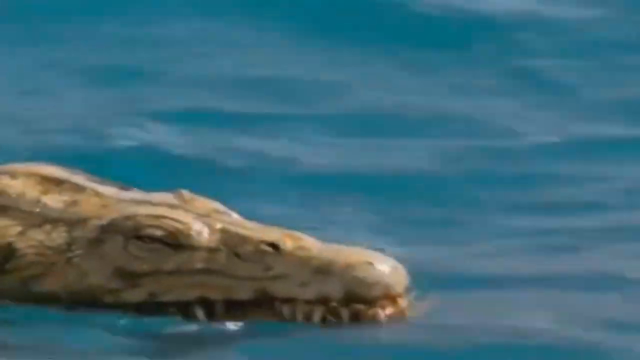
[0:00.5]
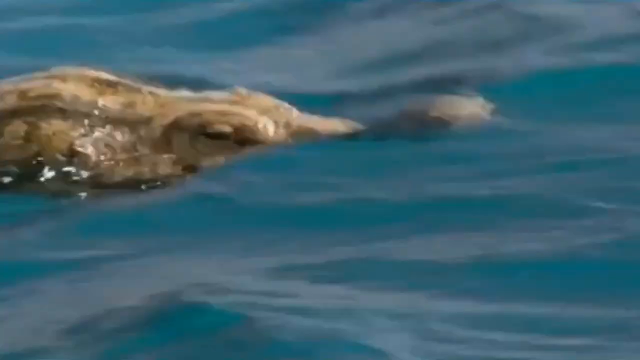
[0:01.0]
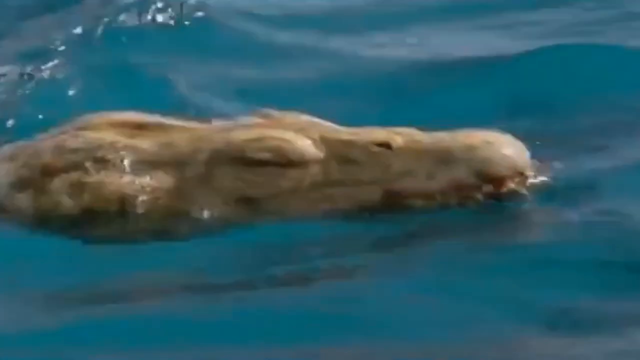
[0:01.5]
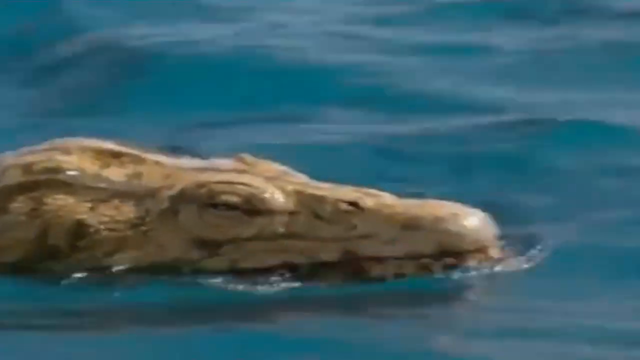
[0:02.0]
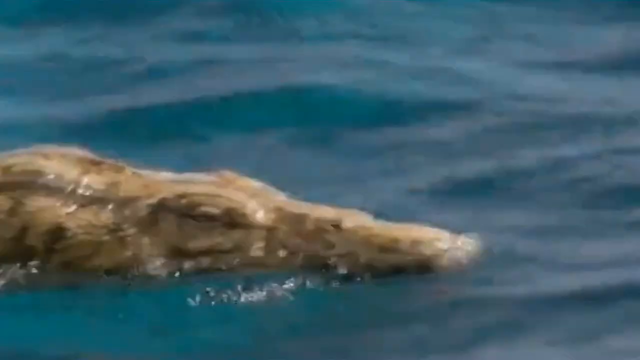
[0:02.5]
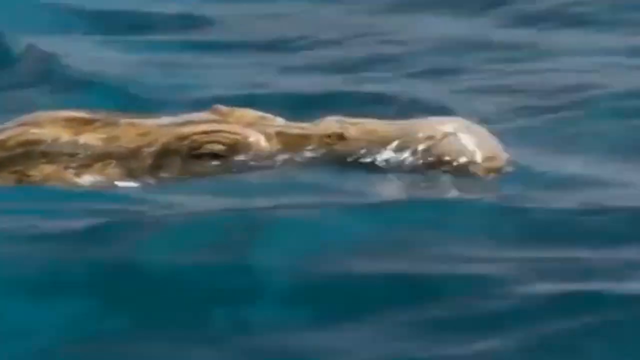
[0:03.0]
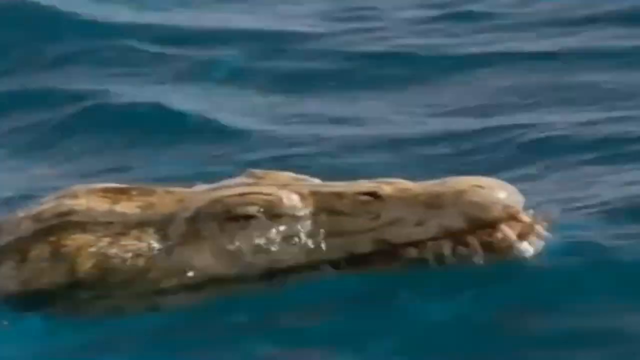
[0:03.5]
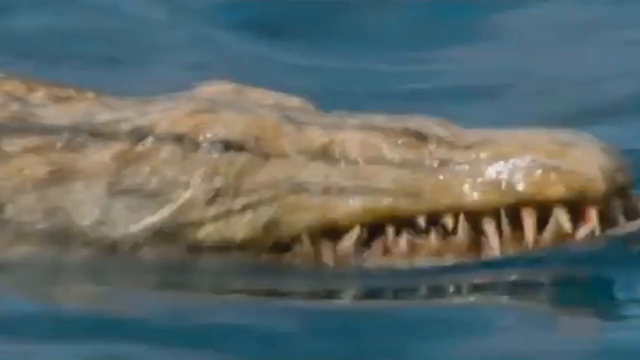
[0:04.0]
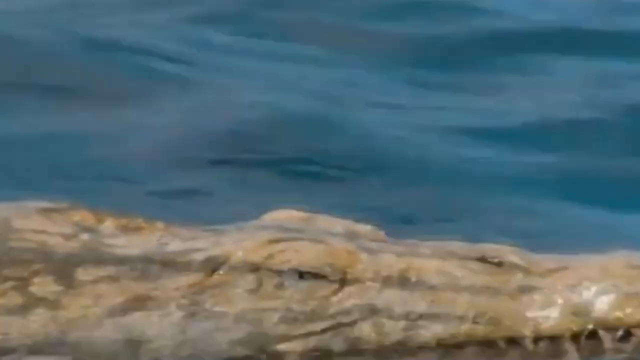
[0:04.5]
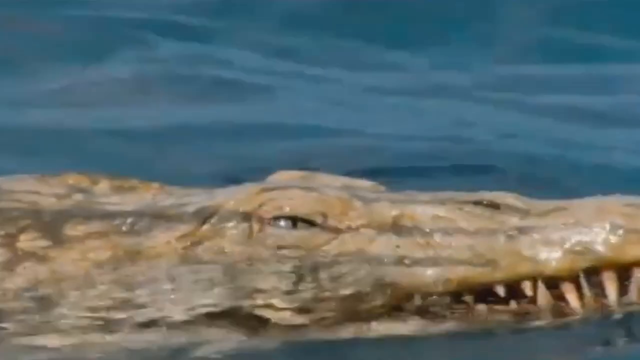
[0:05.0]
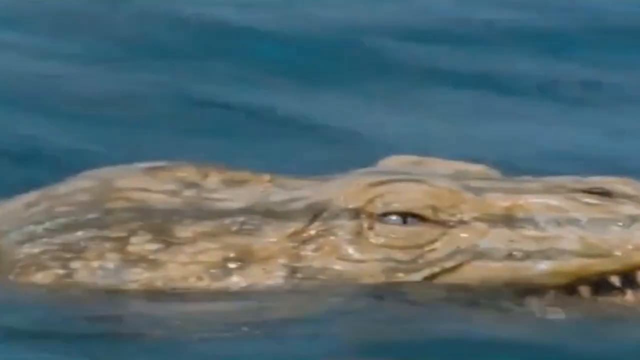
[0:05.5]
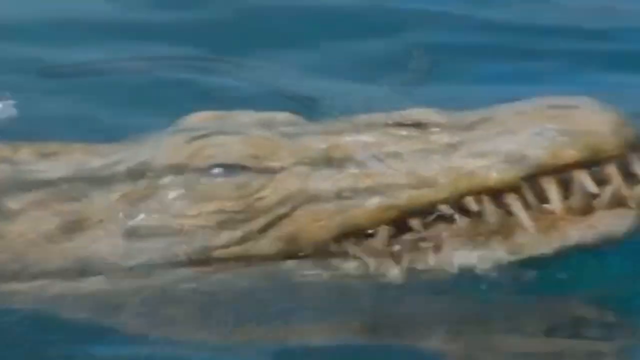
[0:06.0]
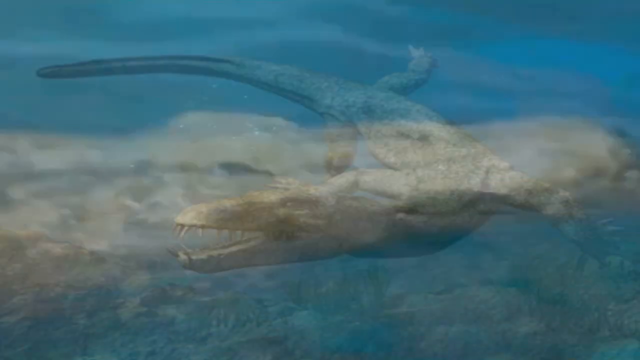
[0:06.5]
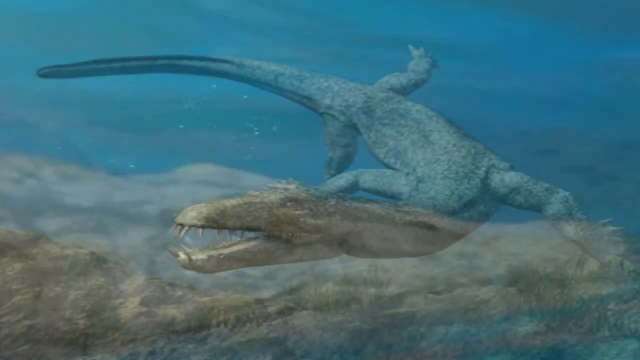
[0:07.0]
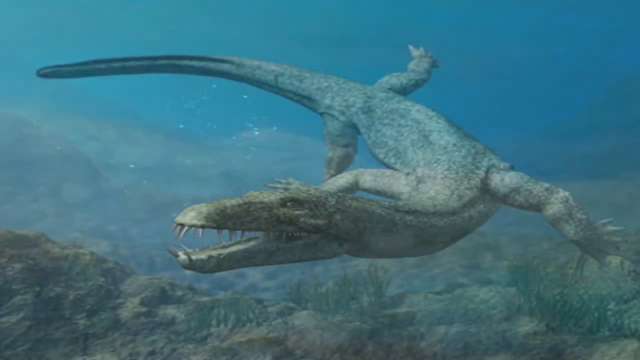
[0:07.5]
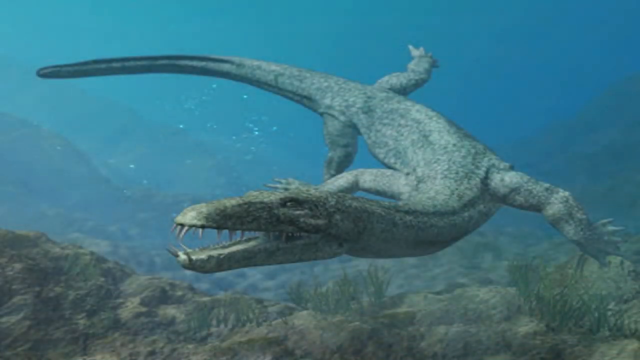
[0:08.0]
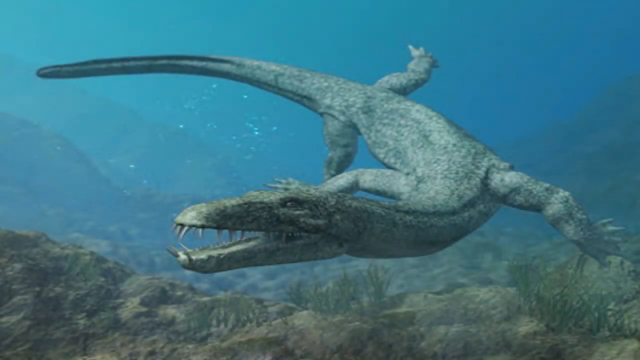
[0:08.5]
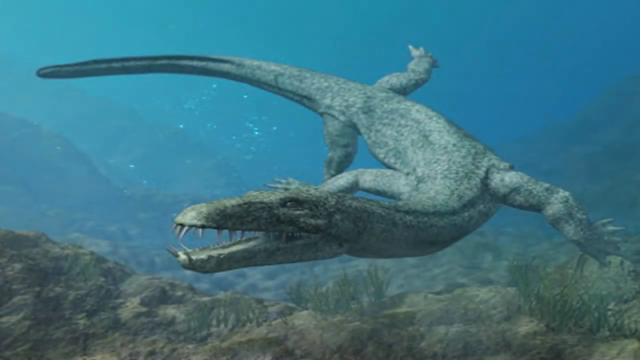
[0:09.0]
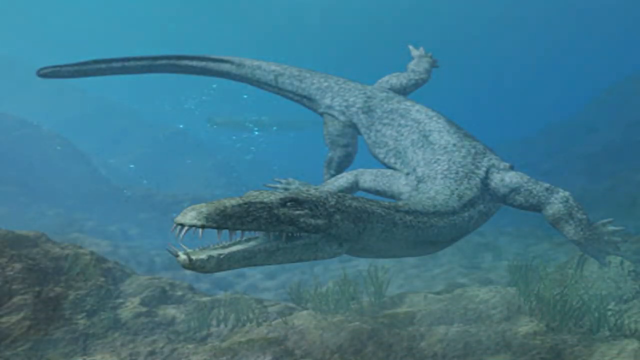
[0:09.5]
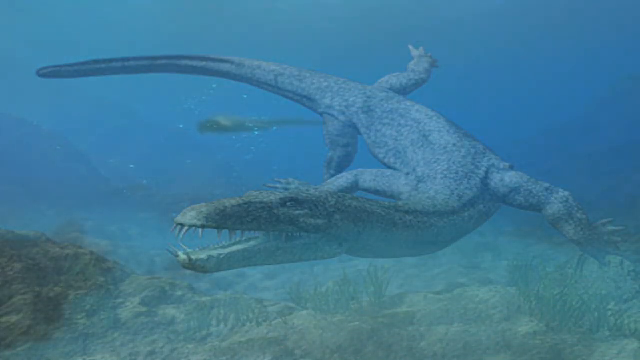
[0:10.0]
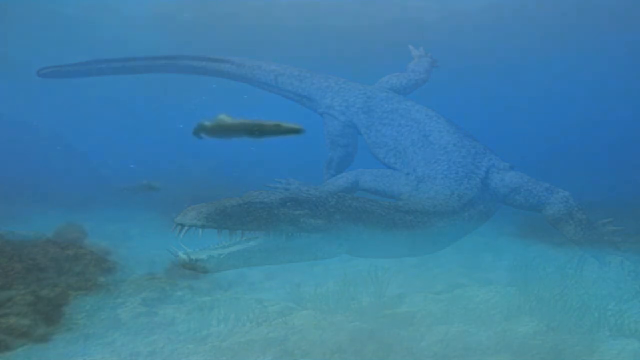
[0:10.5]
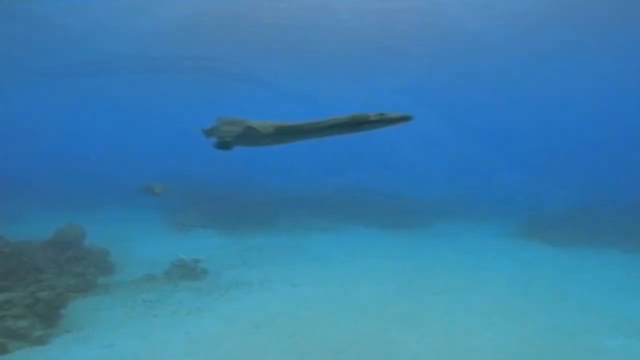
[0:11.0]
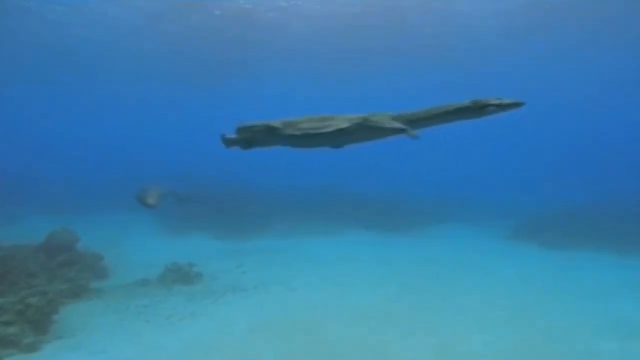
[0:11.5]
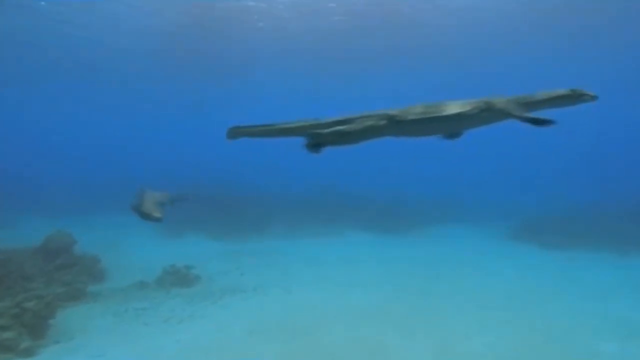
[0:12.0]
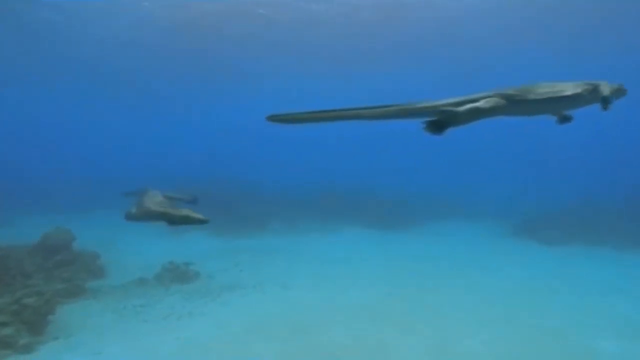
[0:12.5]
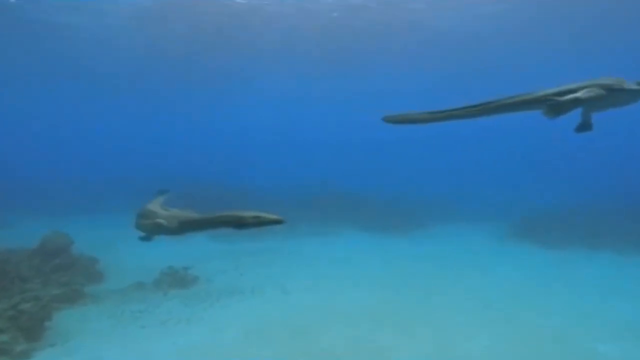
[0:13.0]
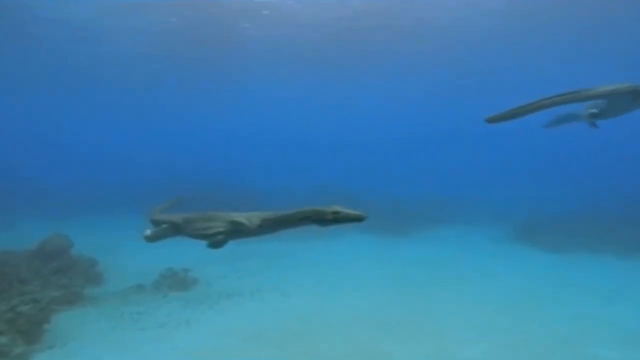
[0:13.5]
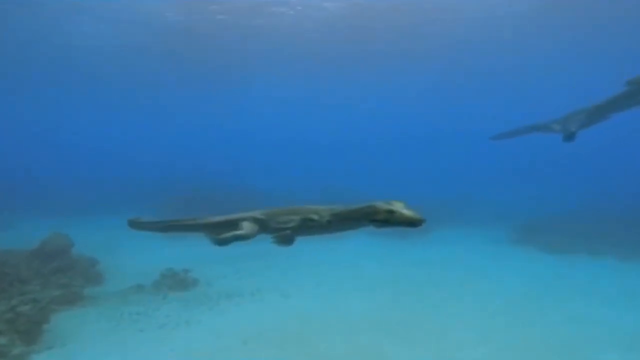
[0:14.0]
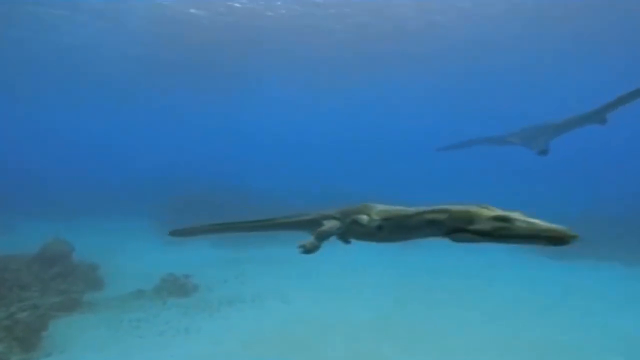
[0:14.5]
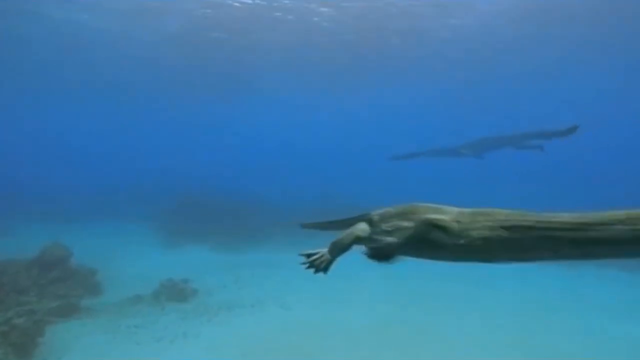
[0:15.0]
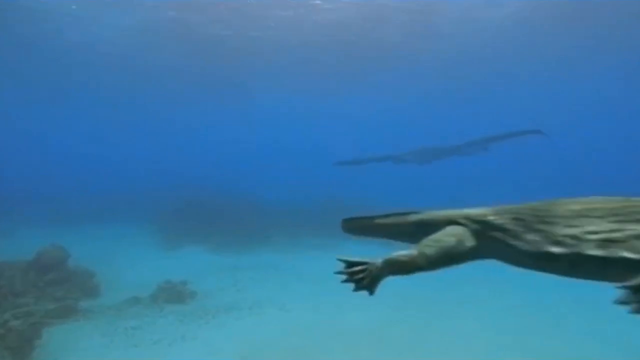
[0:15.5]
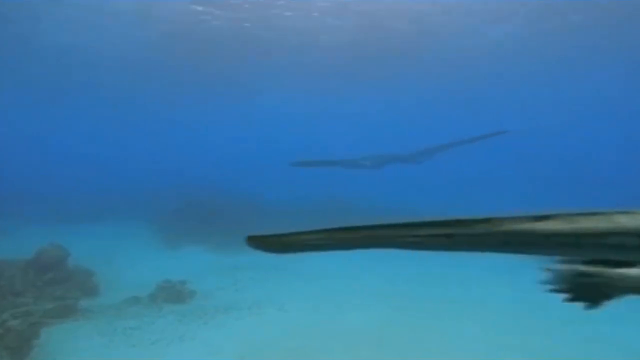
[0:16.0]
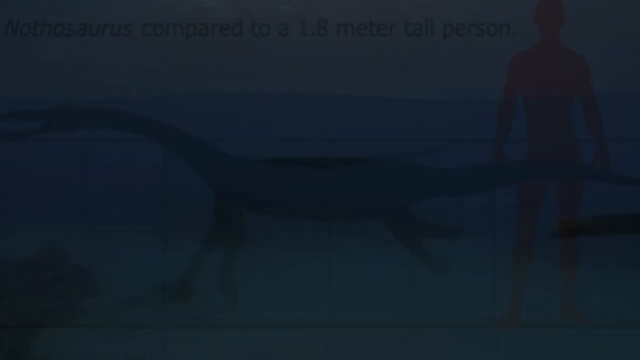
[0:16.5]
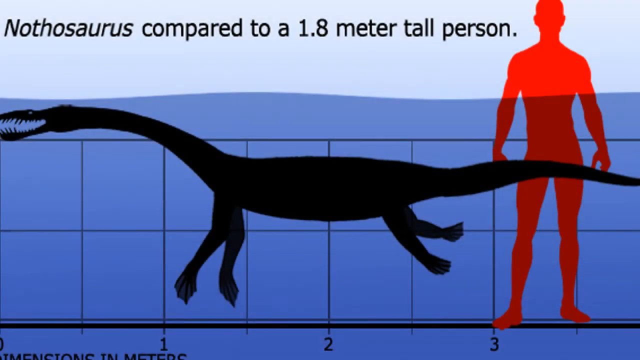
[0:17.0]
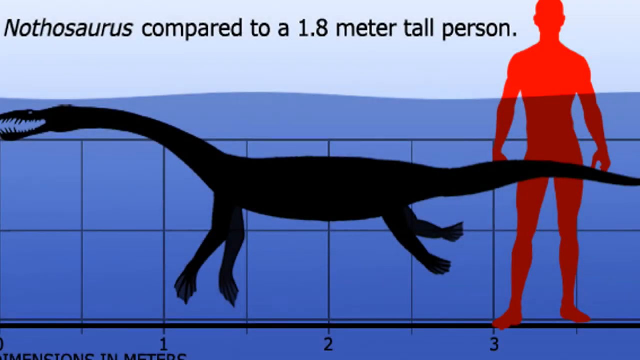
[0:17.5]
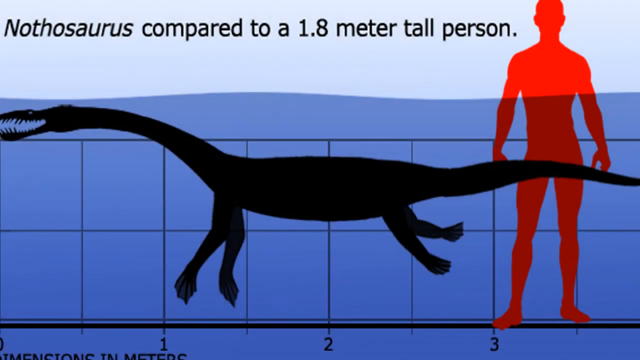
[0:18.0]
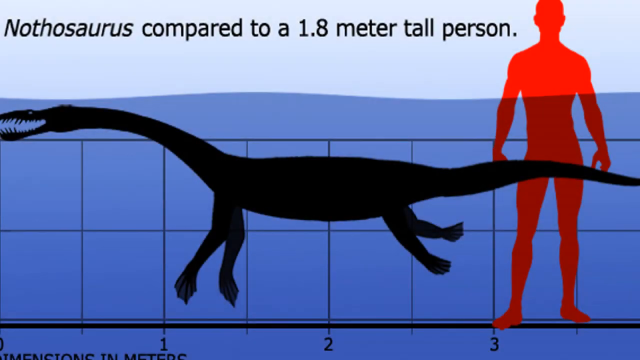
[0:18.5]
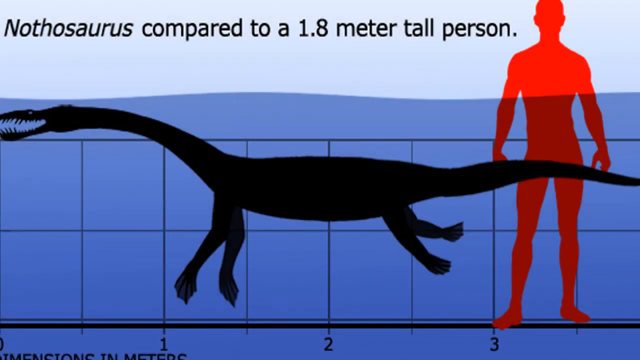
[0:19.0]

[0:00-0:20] A crocodile swims in the water at the start, its eyes almost shut. It has many very sharp teeth and a very long curved tail. The video then shifts to something almost like an animation, showing two alligators swimming in the water. On-screen text says "it's a Knothosaurus compared to a 1.8 meter tall person." A black silhouette of the dinosaur shows how tall it is while swimming in the water, and on the right side is a silhouette of a man colored red, while the other silhouette is black. A chart that looks like squares kind of indicates that the animal would come up almost to a person's armpits, with the animal swimming in the water.